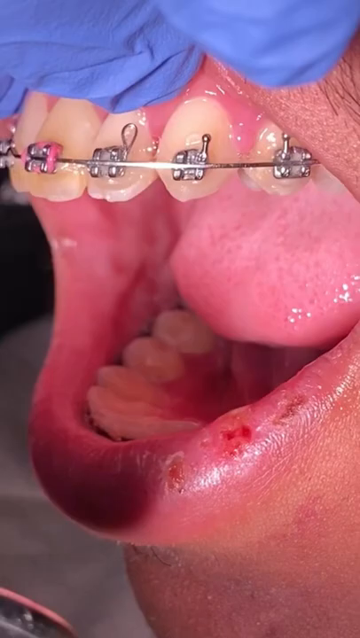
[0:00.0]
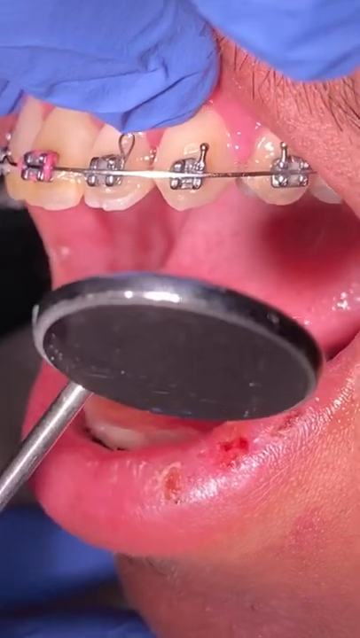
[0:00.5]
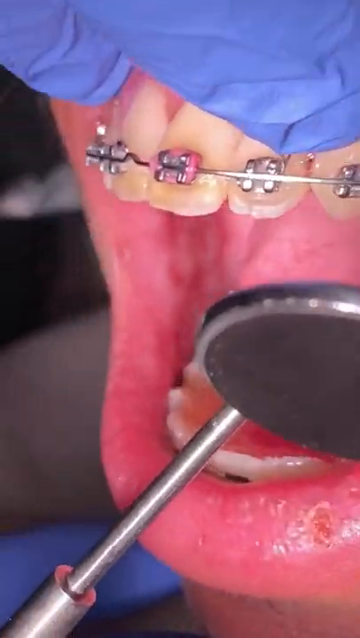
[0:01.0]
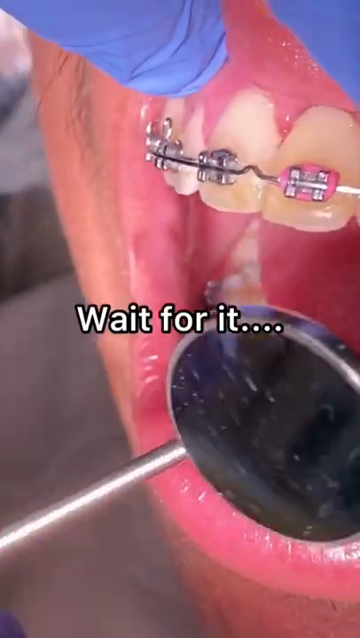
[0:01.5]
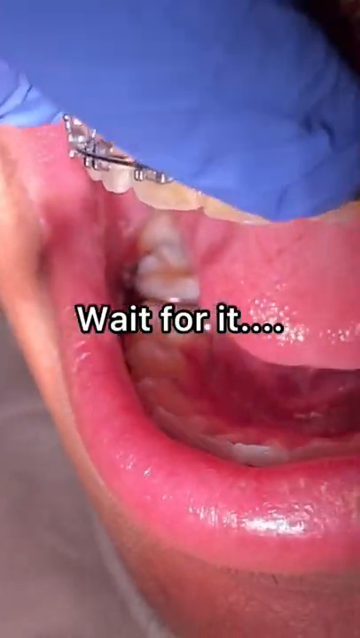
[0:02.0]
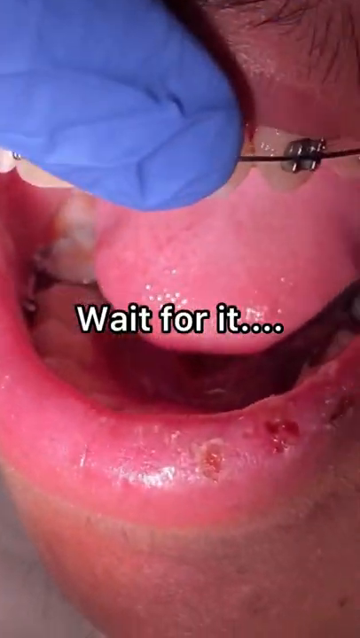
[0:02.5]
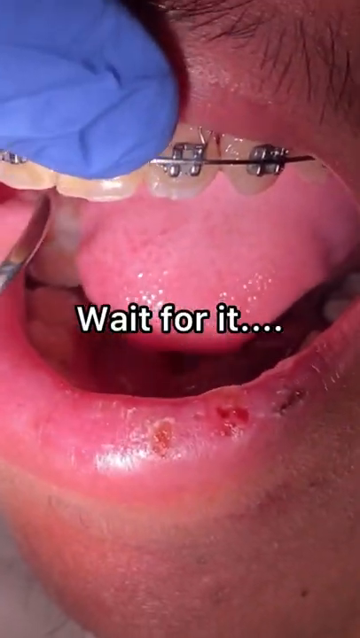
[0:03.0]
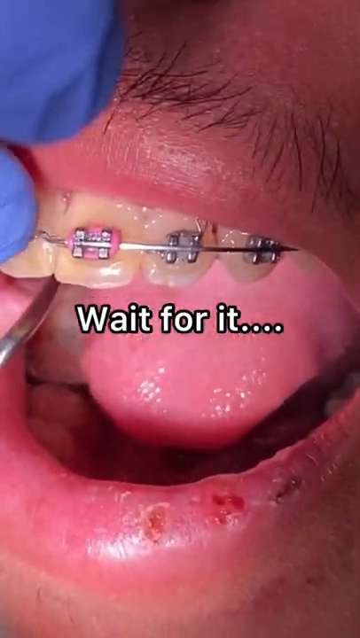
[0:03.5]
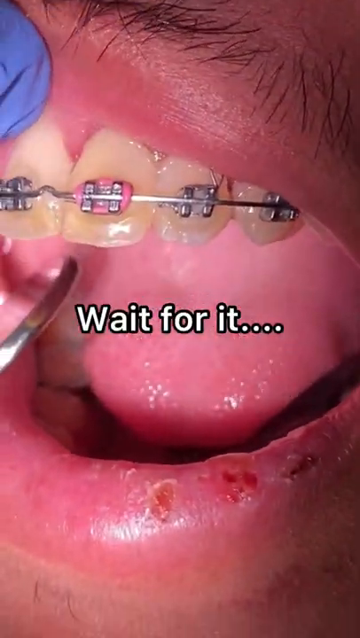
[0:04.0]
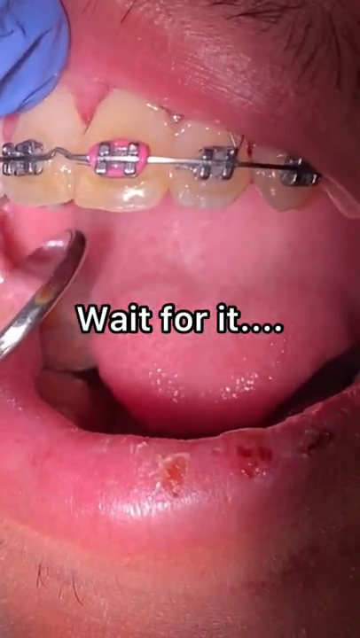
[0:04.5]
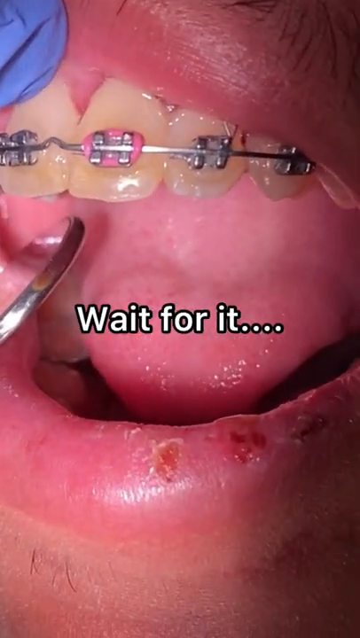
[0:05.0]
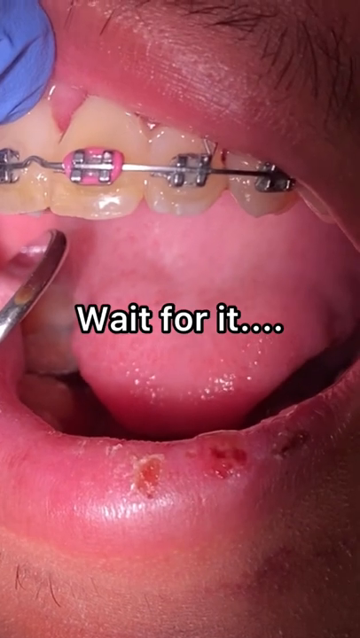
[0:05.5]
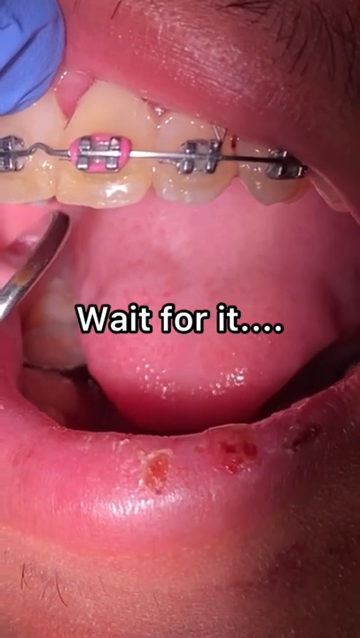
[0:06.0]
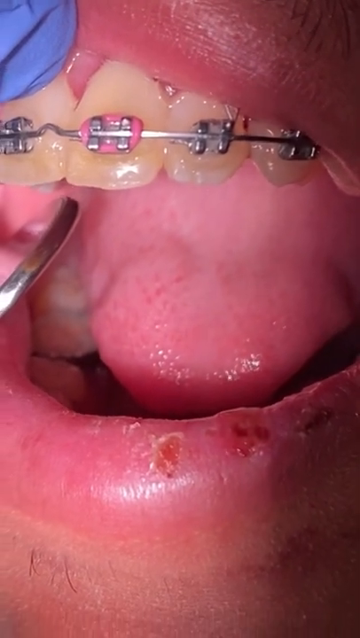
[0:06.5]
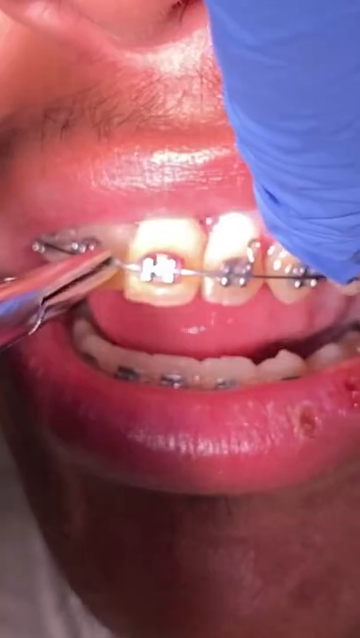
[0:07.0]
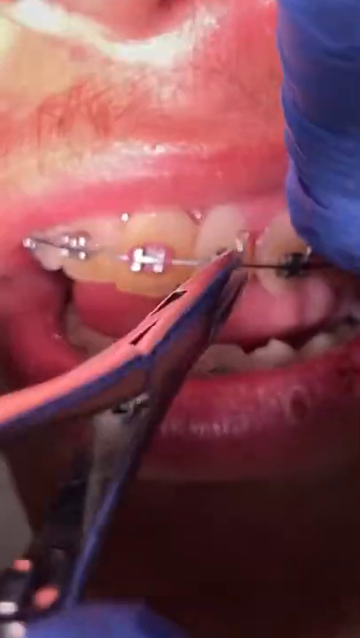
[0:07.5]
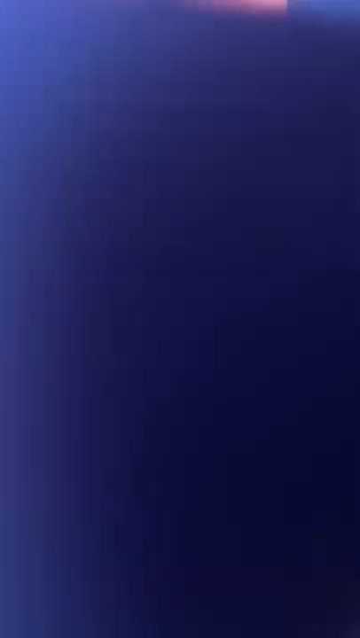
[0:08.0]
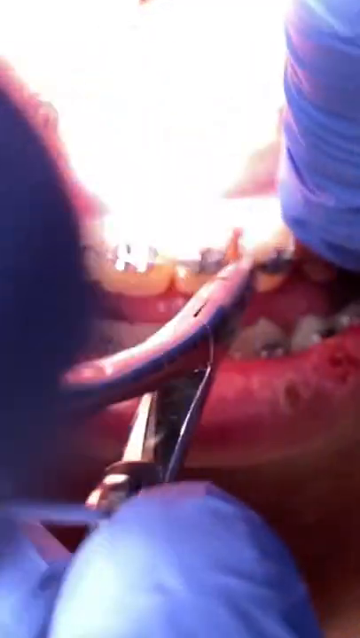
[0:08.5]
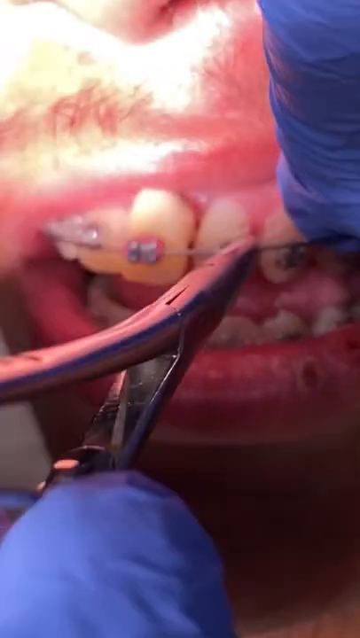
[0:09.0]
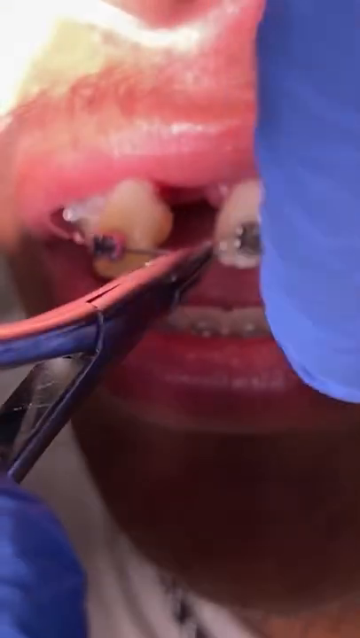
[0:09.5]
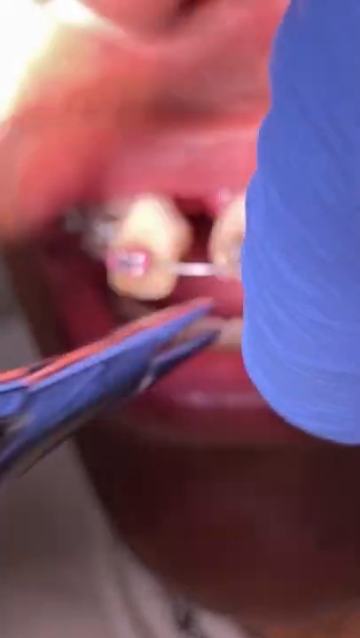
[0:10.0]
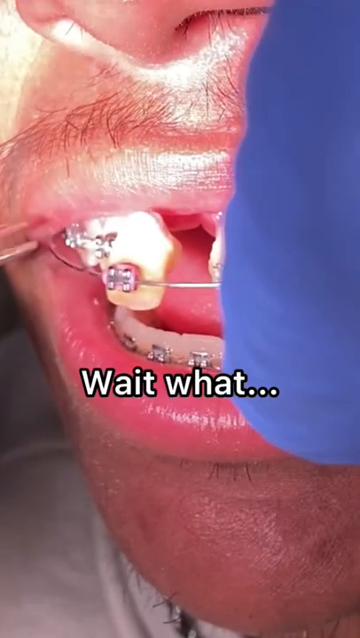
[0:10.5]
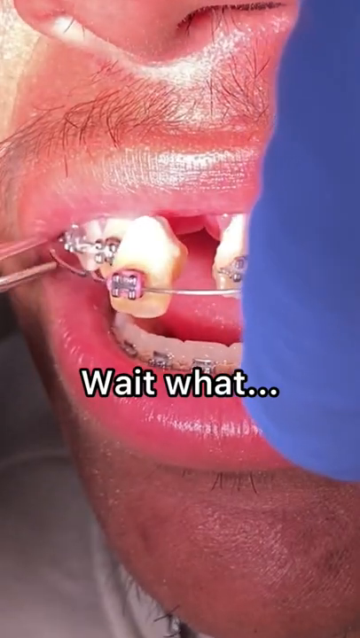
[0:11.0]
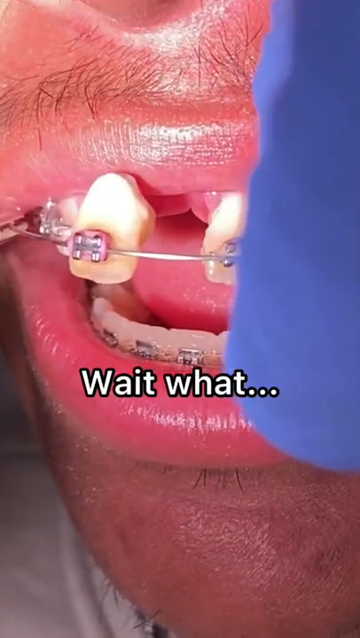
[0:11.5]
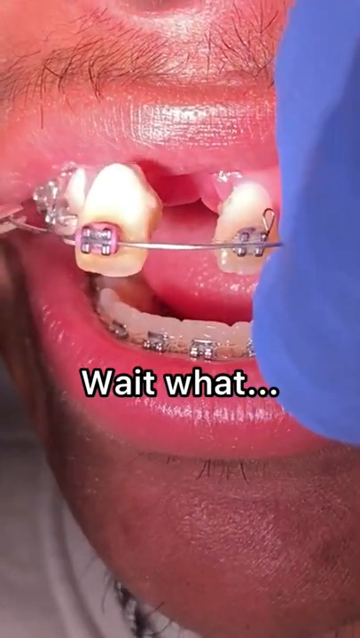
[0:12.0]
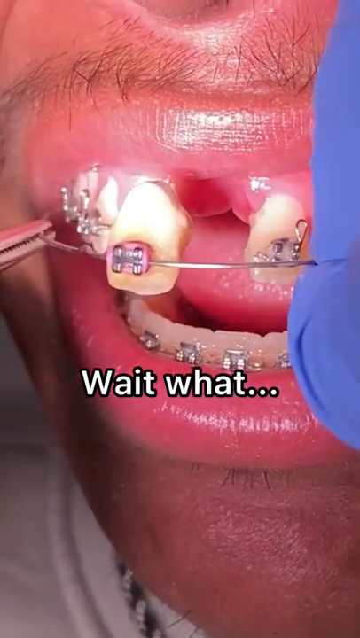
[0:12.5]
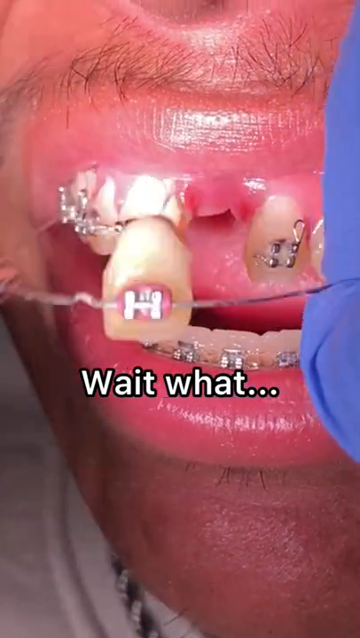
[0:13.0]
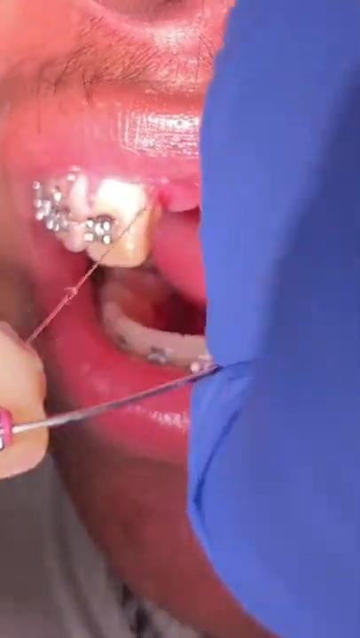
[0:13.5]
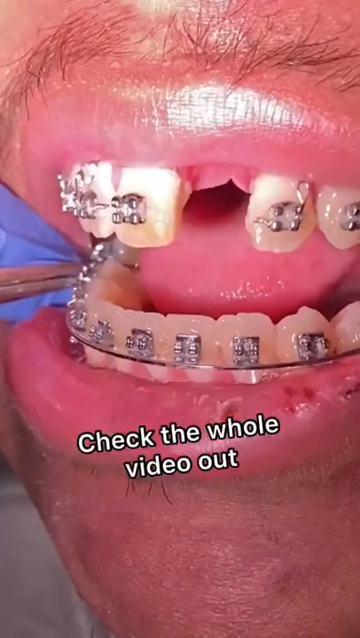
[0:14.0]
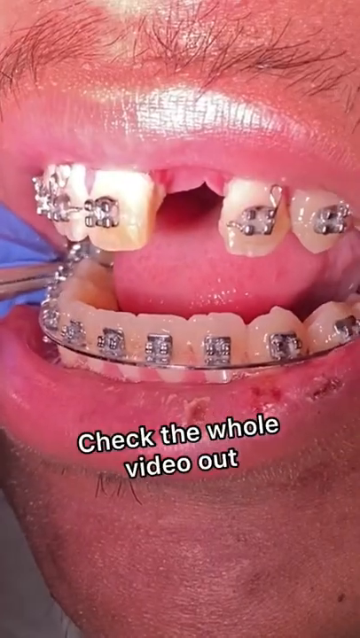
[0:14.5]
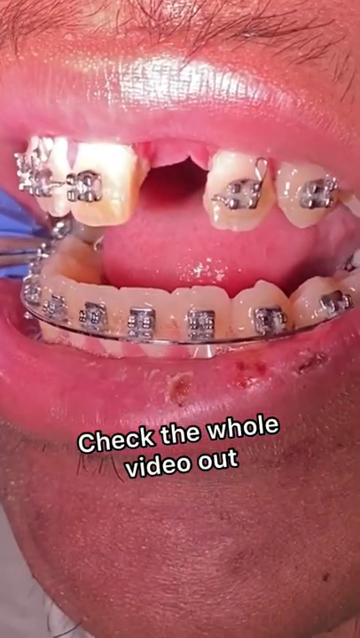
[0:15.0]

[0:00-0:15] The video, titled Tooth Without a Root, shows a close-up of a Caucasian person's mouth. The lower lip has several little scabs toward the left side. Both the top and bottom teeth have braces, with a single wire attached to each tooth. The person appears to be male, since there is hair on the upper lip, like a young man's mustache just starting to come in. Someone holds up a little round mirror of the kind that can be put in the mouth to check things. The title says "wait for it." A pair of clippers cuts the wire toward the left side of the mouth, between the front incisors. As the wire is peeled away from the other teeth, the front center tooth on the right side comes out. The tooth has no root and nothing holding it in, so it comes out when the brace is pulled.